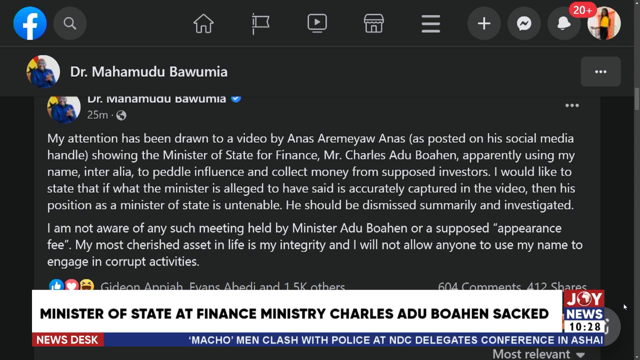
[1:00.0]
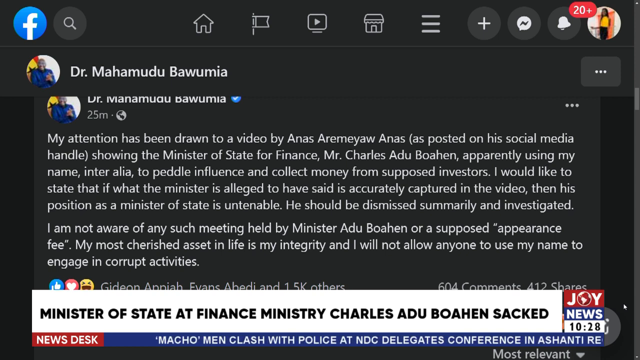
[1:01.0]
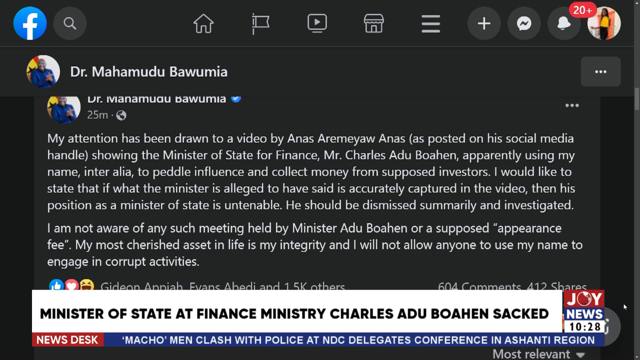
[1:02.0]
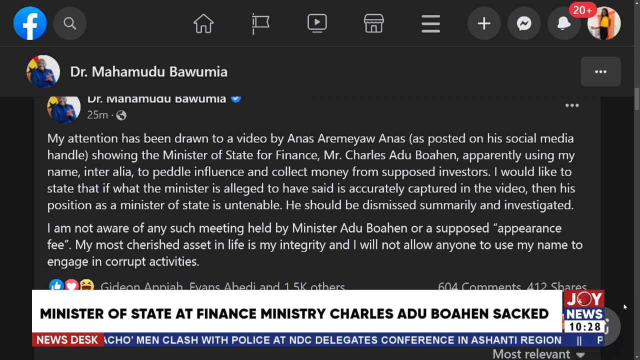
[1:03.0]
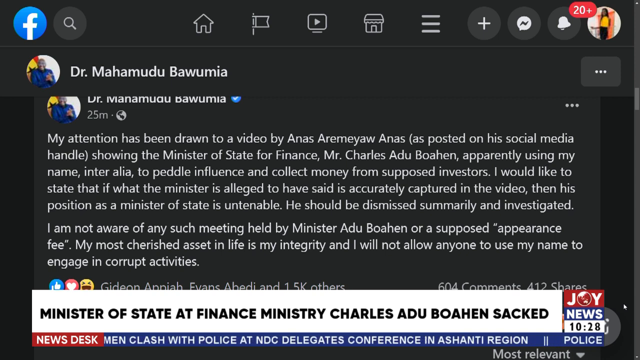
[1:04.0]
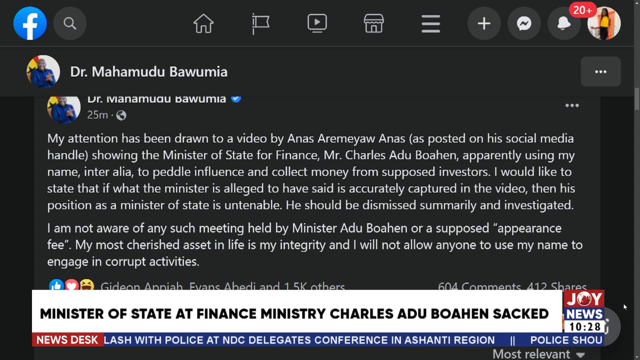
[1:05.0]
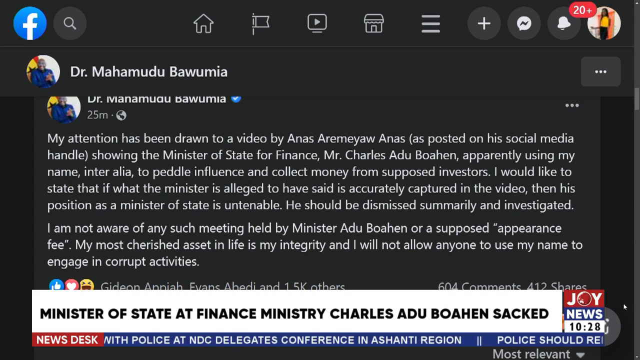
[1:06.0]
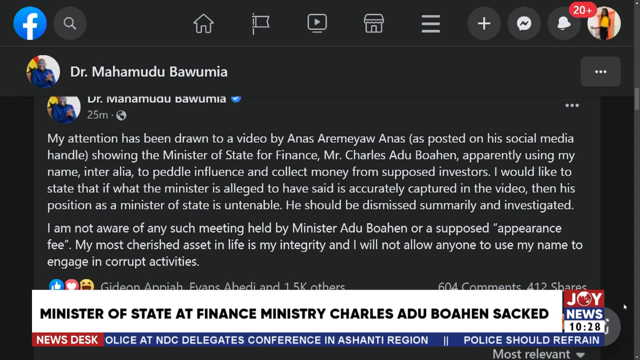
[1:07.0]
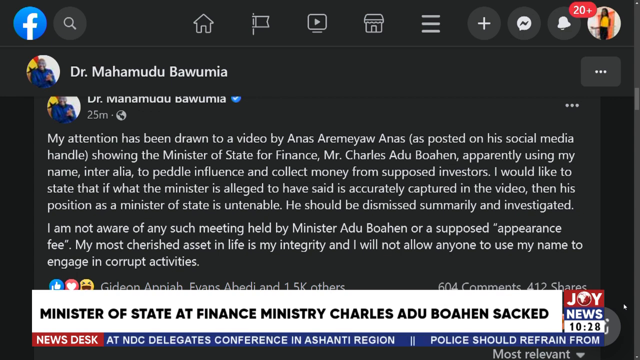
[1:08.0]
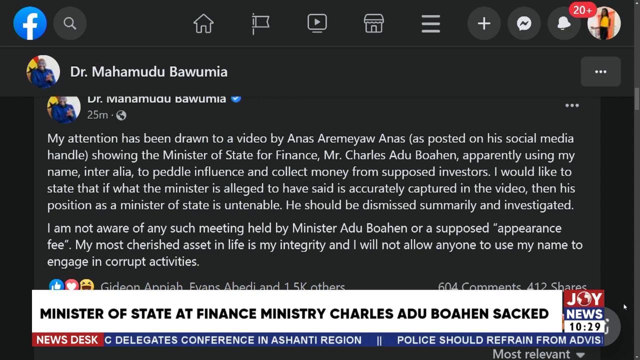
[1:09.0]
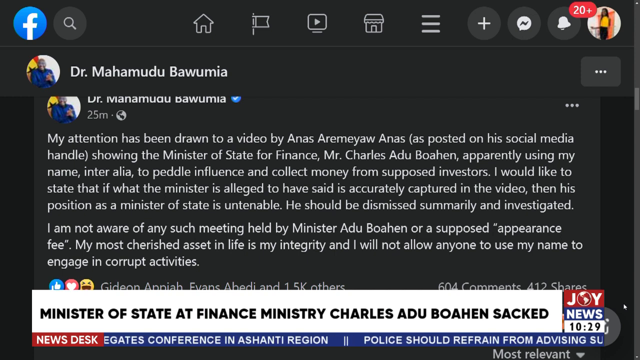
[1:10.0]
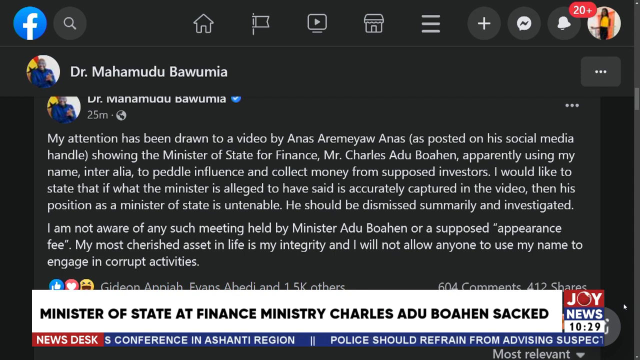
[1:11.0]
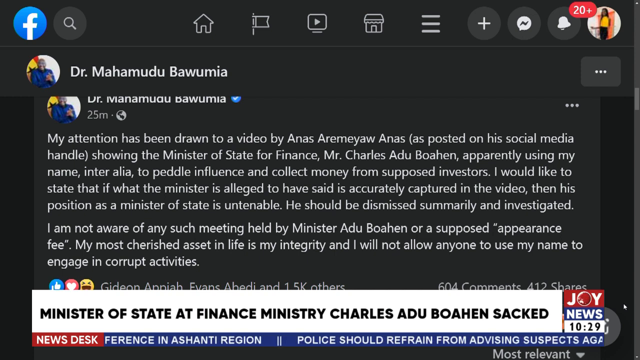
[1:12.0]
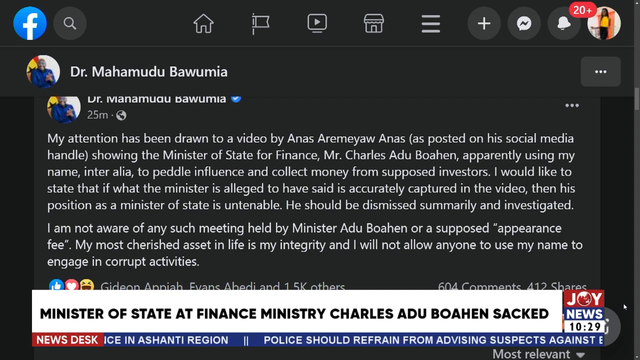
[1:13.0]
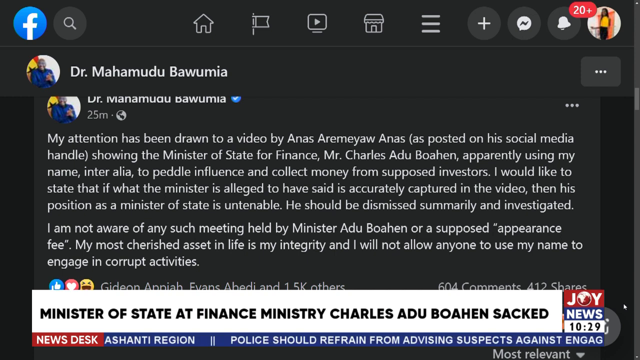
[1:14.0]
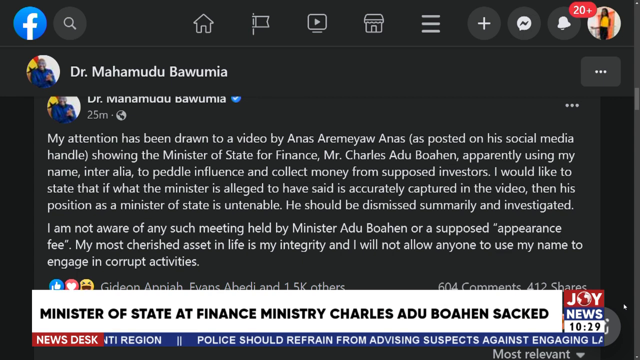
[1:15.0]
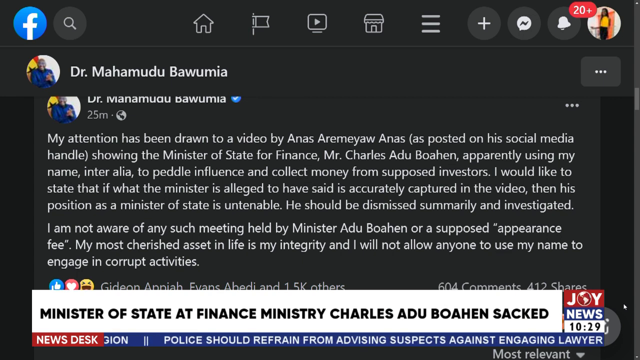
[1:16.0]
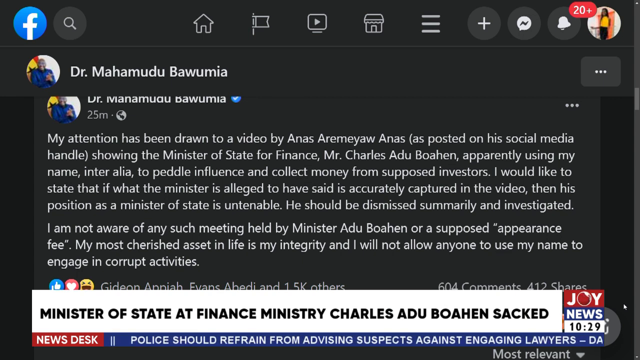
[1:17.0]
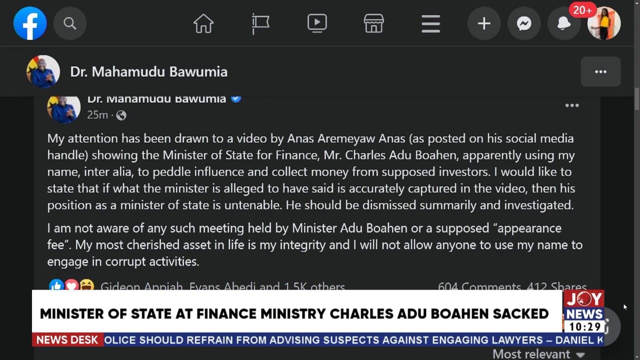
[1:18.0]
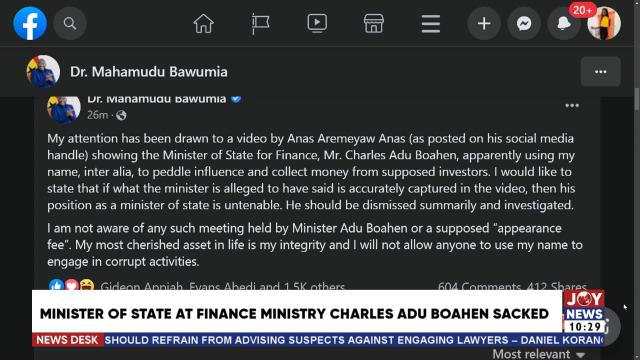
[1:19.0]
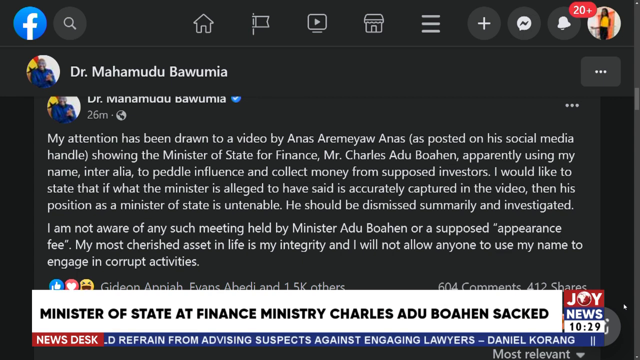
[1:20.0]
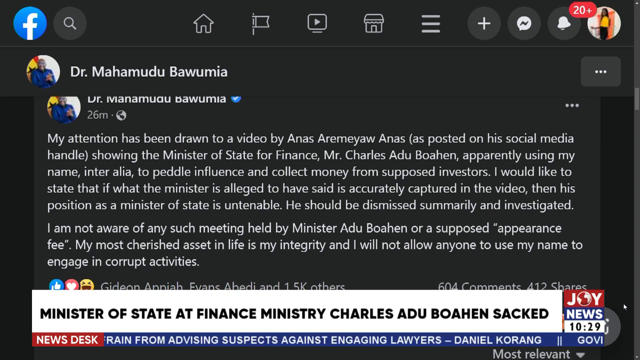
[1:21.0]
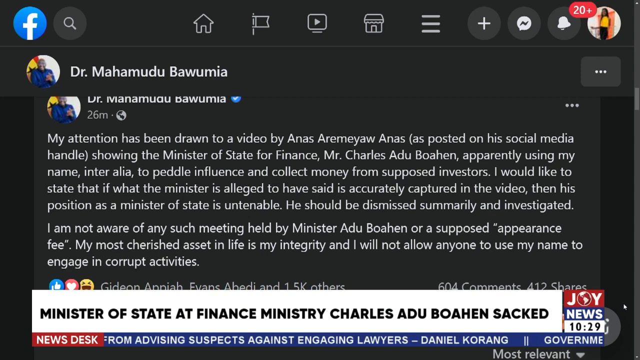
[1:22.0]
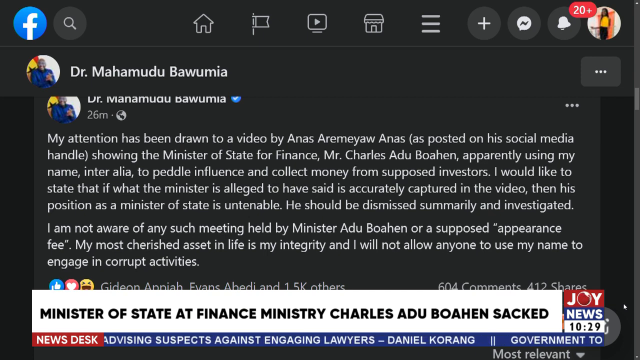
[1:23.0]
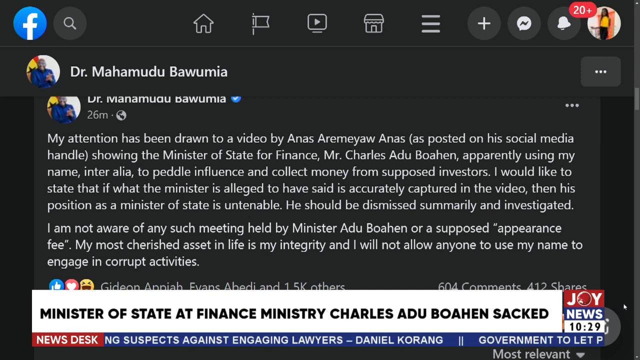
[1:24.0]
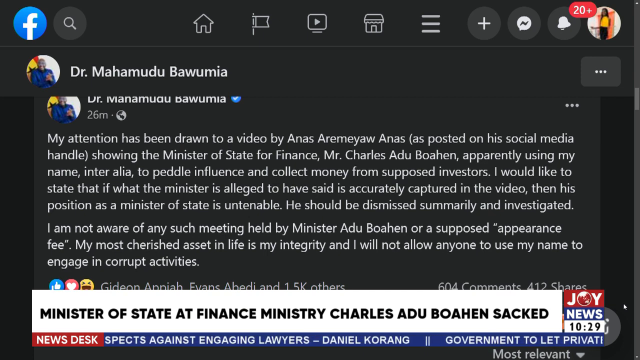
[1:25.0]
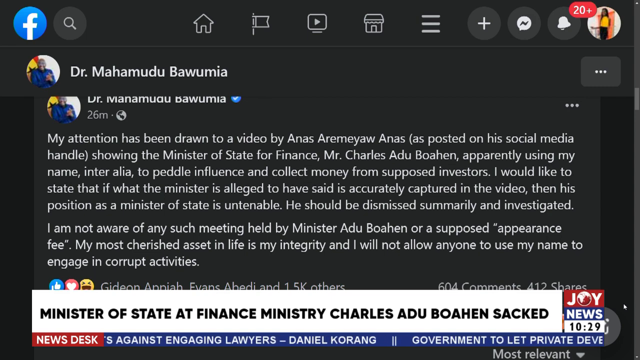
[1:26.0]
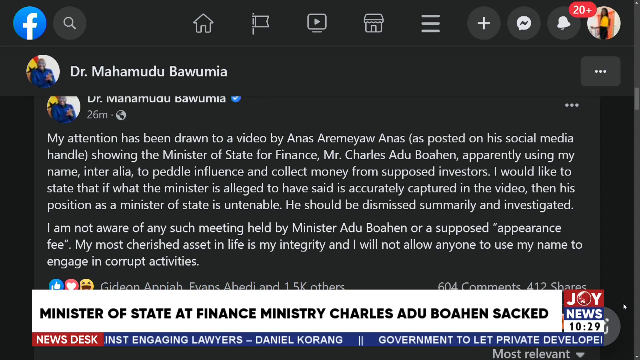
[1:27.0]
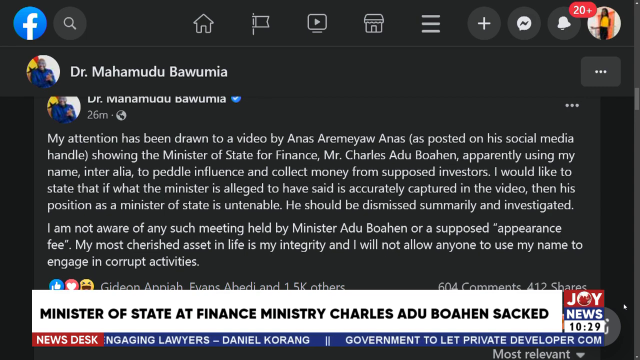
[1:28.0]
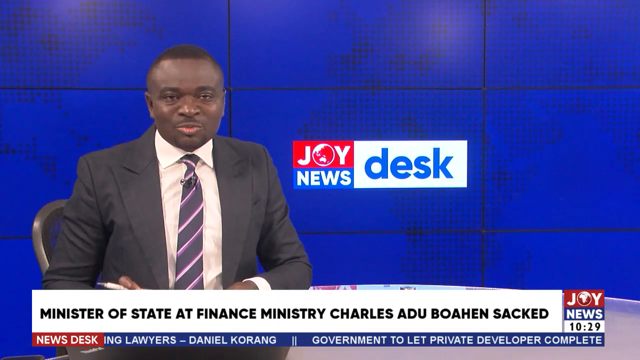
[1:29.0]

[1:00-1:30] The social media post from Dr. Mohamudu Bawumia remains on screen. It reads: "My attention has been drawn to a video by Anas Aremeyaw Anas, as posted on his social media handle, showing the Minister of State for Finance, Mr. Charles Adu Boahen, apparently using my name inter alia to peddle influence and collect money from supposed investors. I would like to state that if what the minister is alleged to have said is accurately captured in the video, then his position as a minister of state is untenable. He should be dismissed summarily and investigated. I'm not aware of any such meeting held by Minister Adu Boahen or his supposed appearance fee. My most cherished asset in life is my integrity, and I will not allow anyone to use my name to engage in corrupt activities." Below it are reaction icons: a like, a heart and a laughter icon, and a count of 604 comments, though the comments themselves are not visible. It appears to be a Facebook post, with the Facebook icon in the top left-hand corner. This is still the Joy News Desk broadcast.